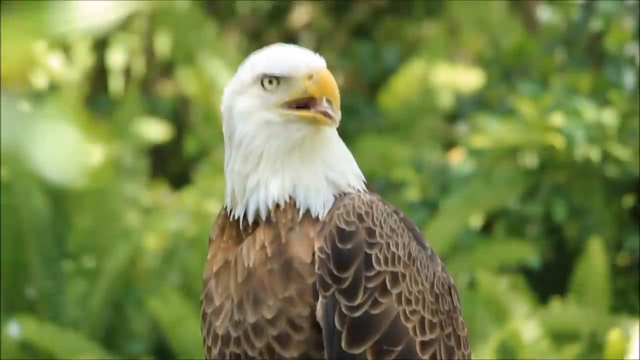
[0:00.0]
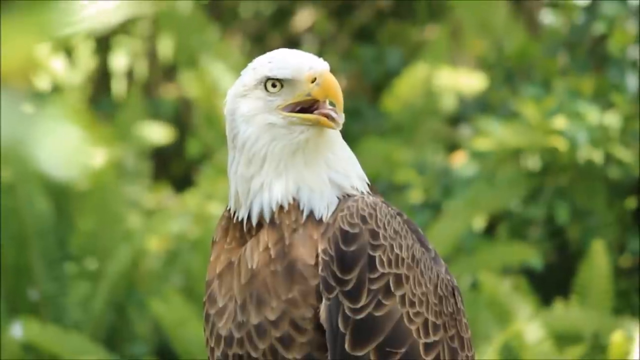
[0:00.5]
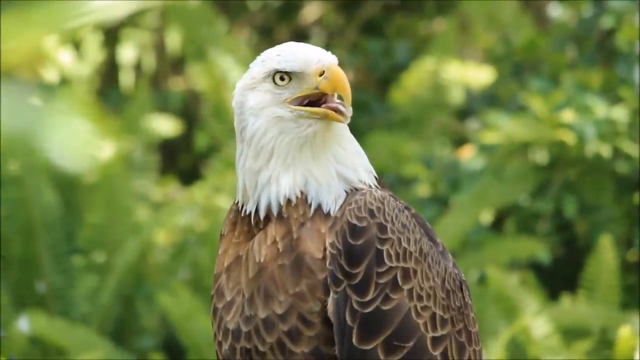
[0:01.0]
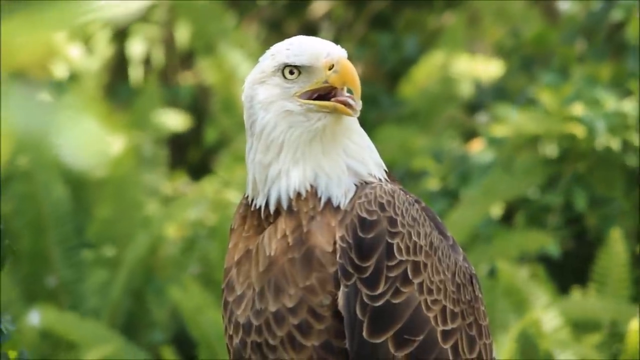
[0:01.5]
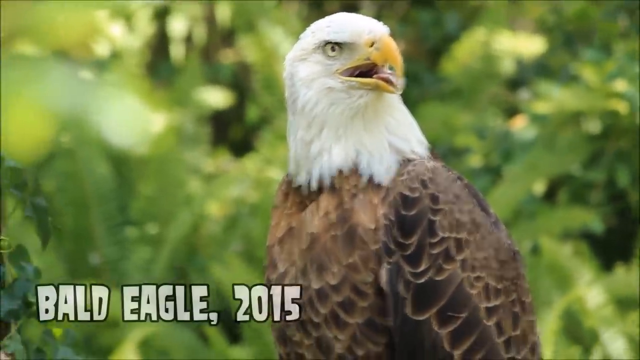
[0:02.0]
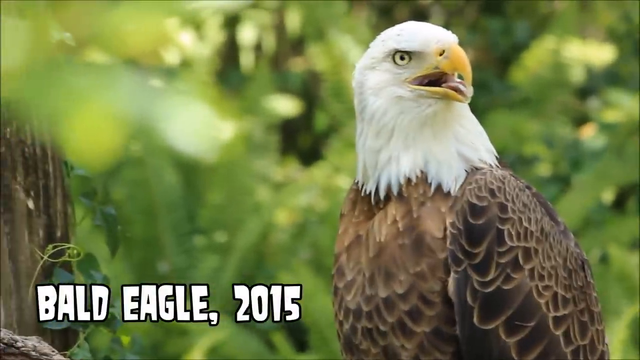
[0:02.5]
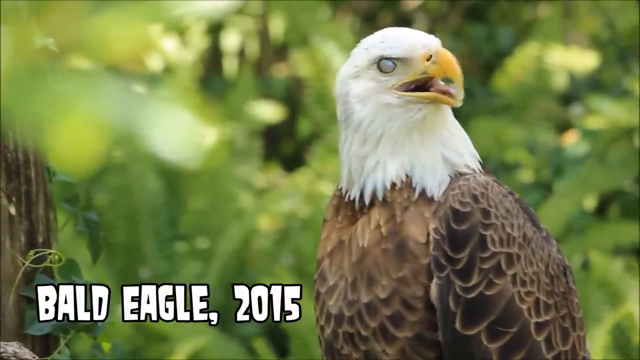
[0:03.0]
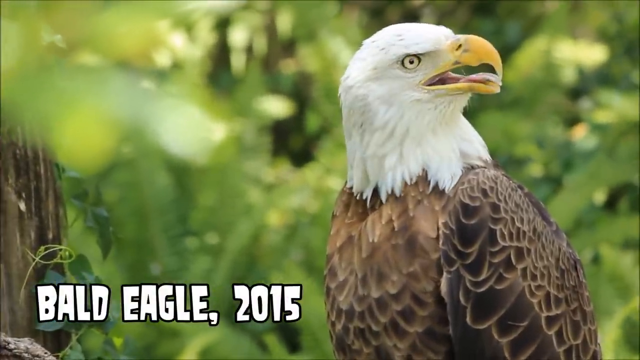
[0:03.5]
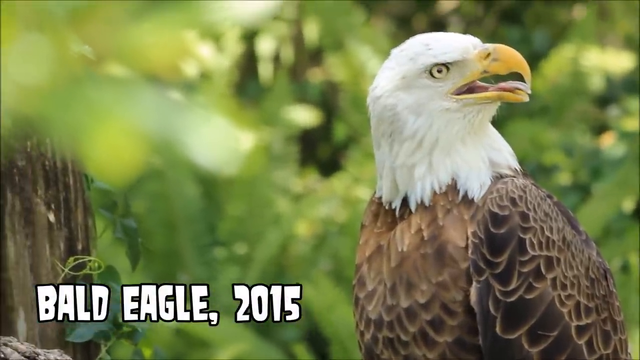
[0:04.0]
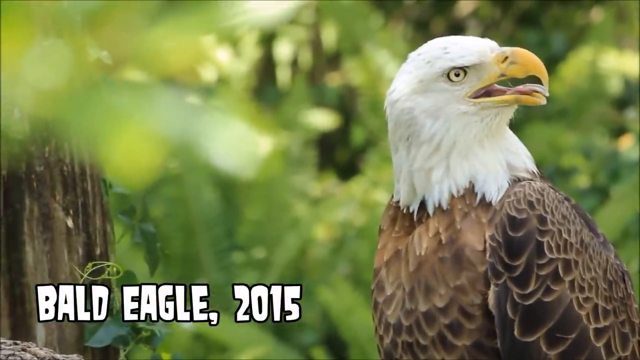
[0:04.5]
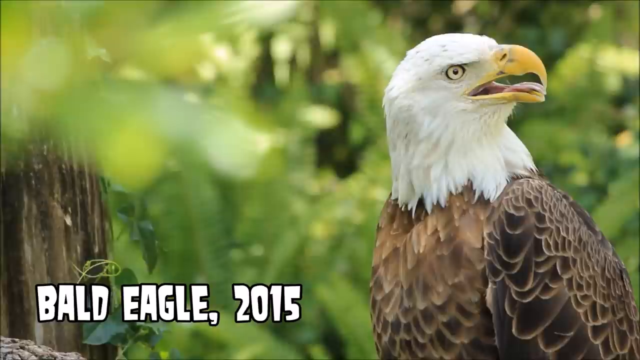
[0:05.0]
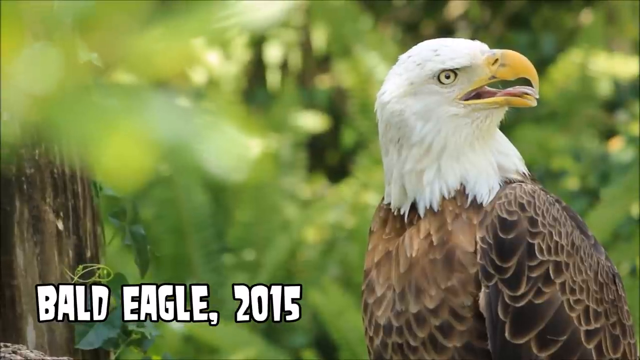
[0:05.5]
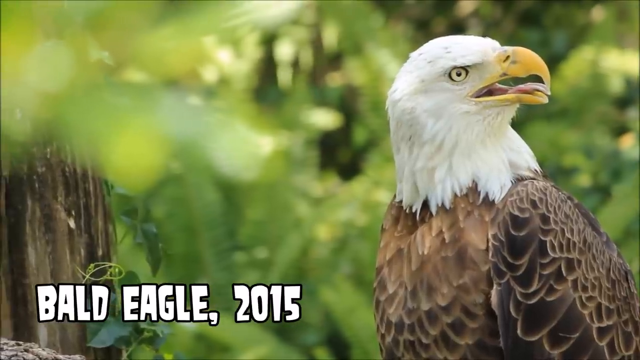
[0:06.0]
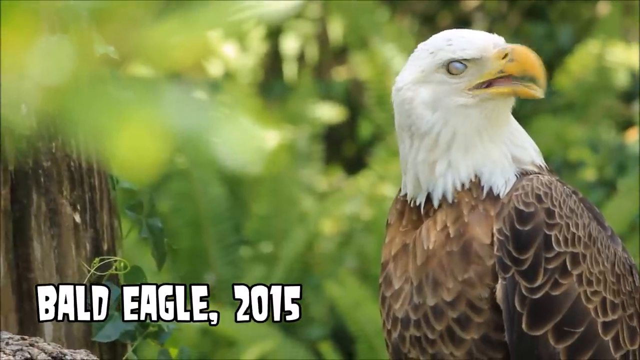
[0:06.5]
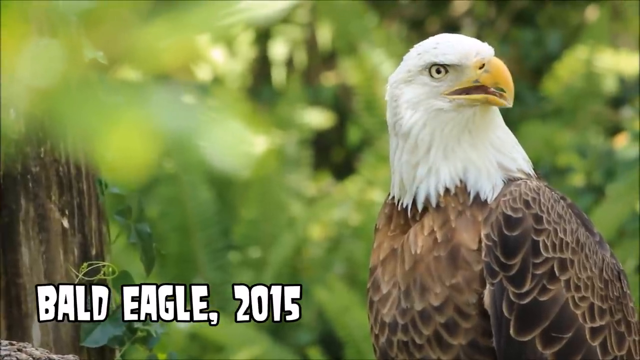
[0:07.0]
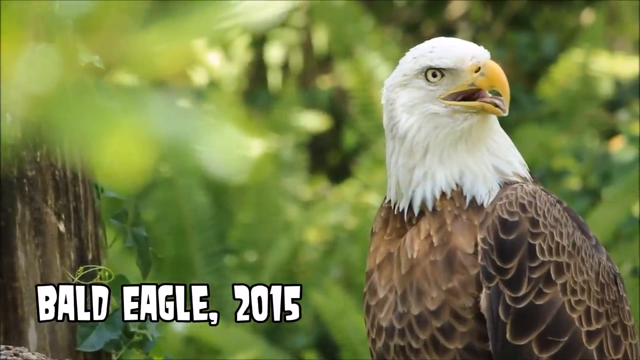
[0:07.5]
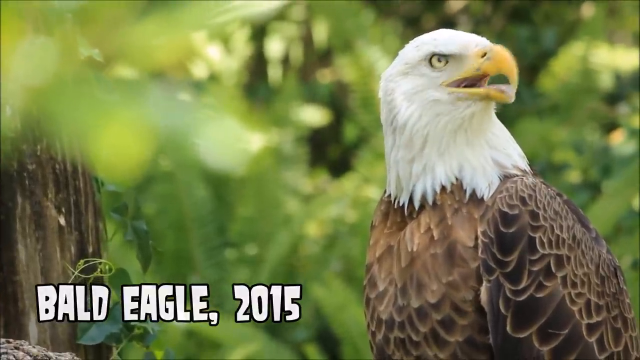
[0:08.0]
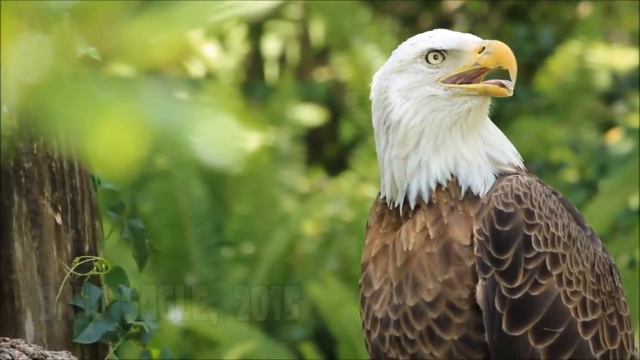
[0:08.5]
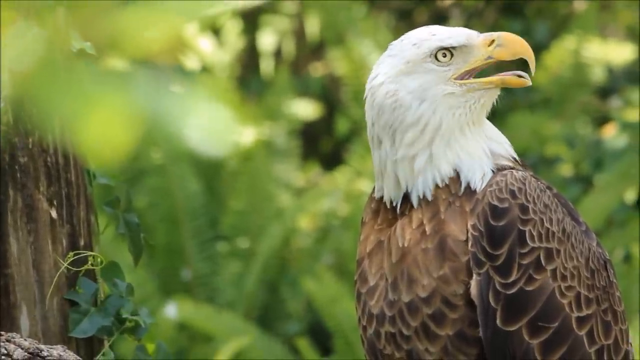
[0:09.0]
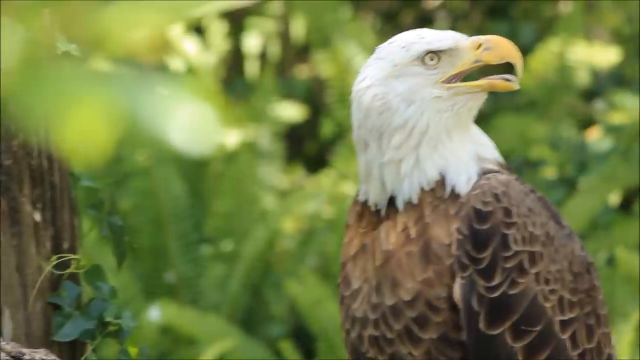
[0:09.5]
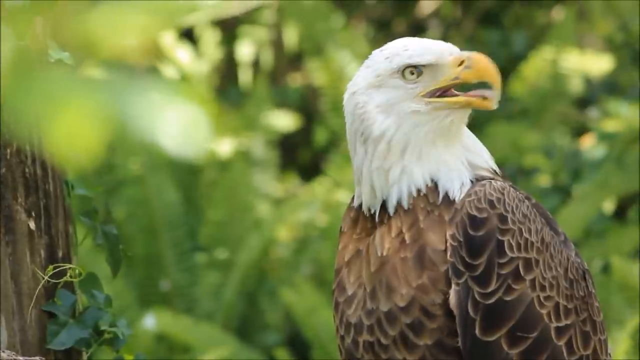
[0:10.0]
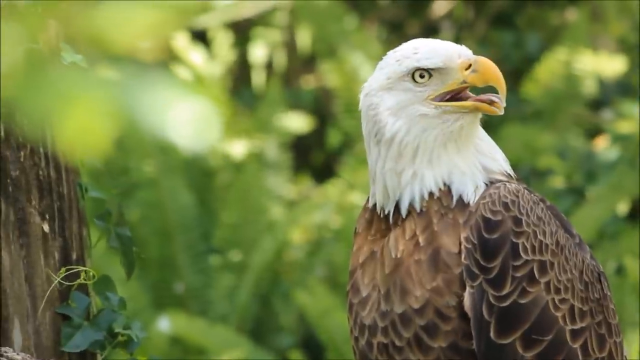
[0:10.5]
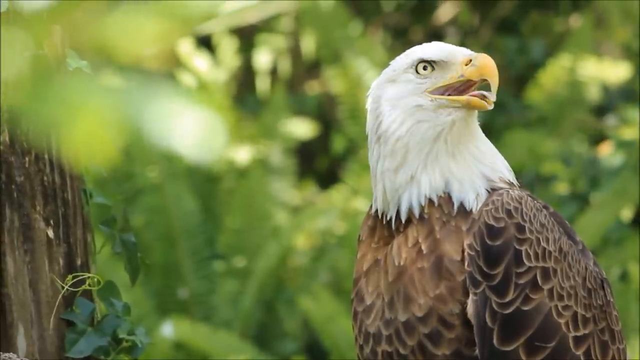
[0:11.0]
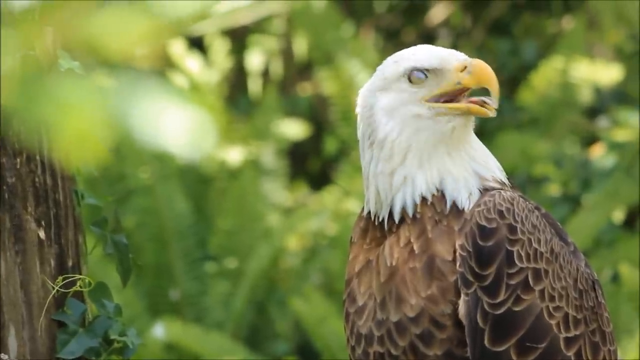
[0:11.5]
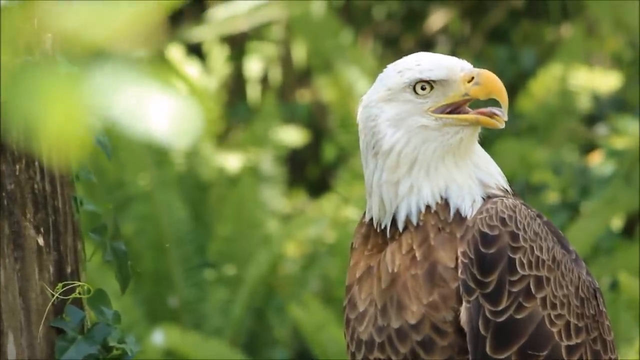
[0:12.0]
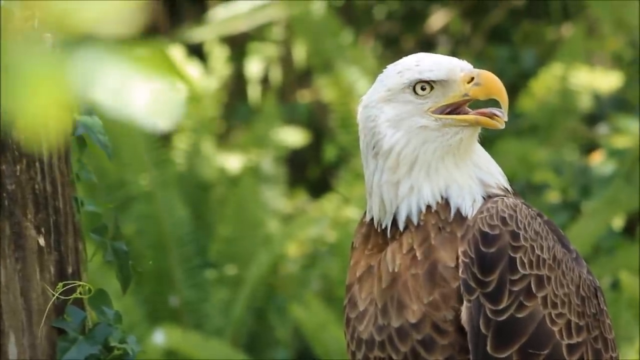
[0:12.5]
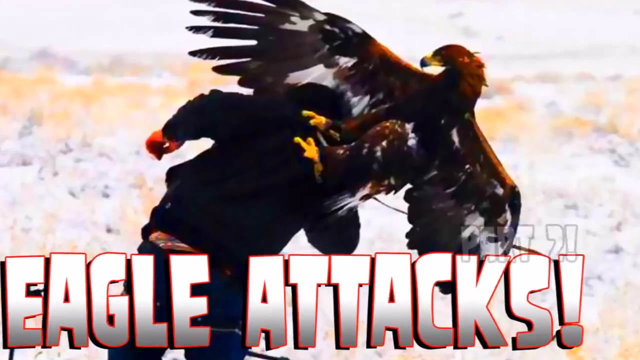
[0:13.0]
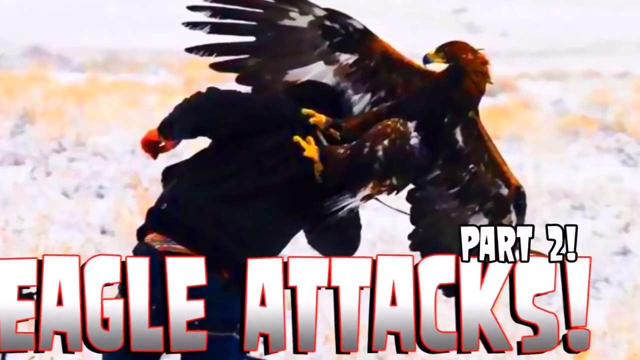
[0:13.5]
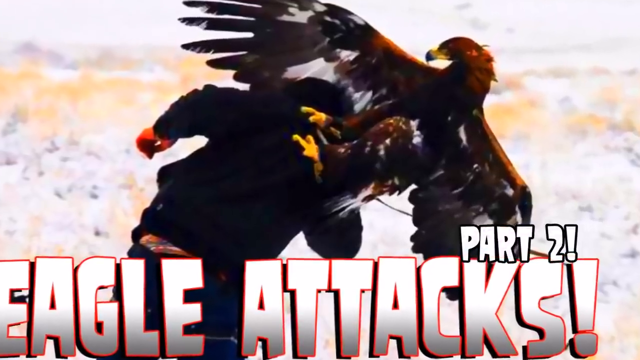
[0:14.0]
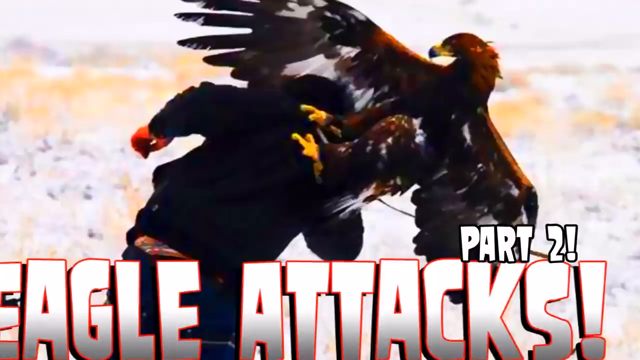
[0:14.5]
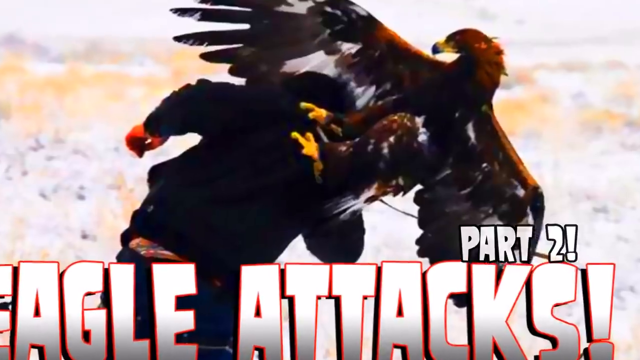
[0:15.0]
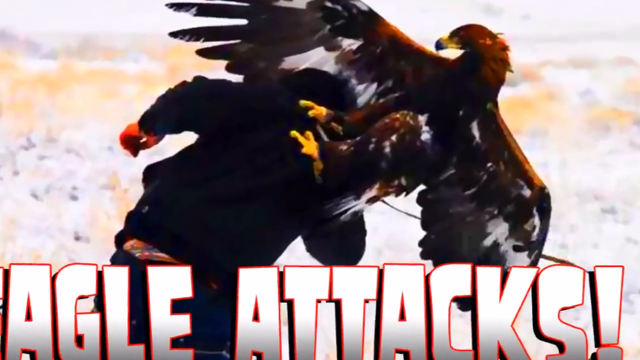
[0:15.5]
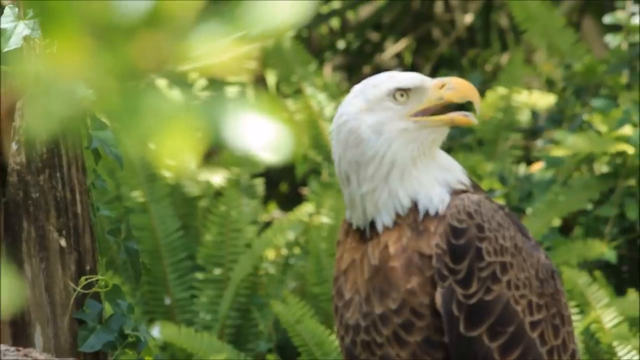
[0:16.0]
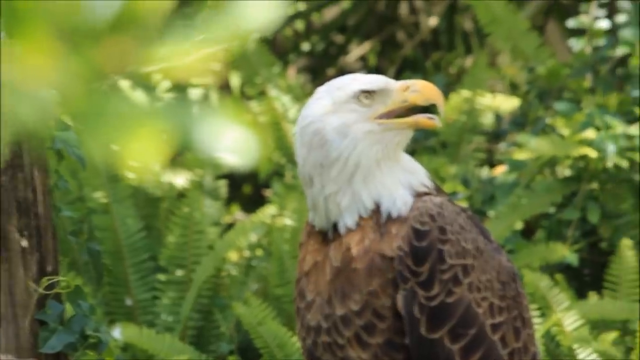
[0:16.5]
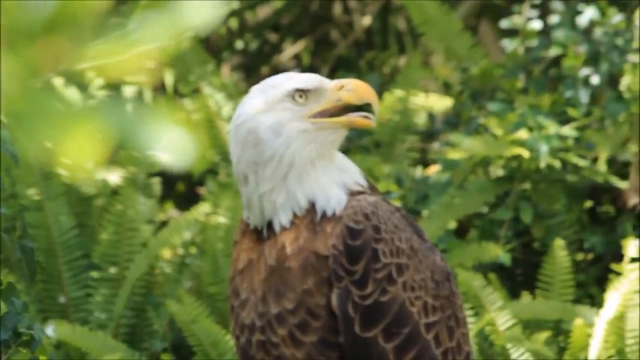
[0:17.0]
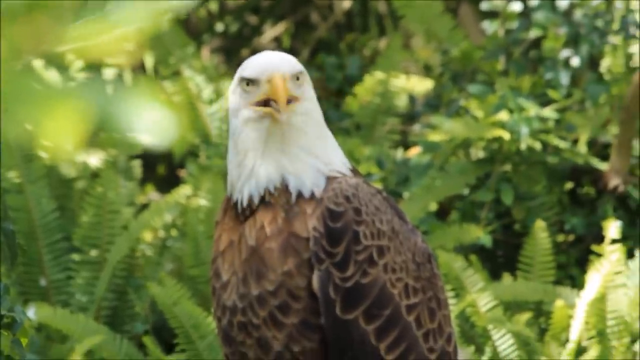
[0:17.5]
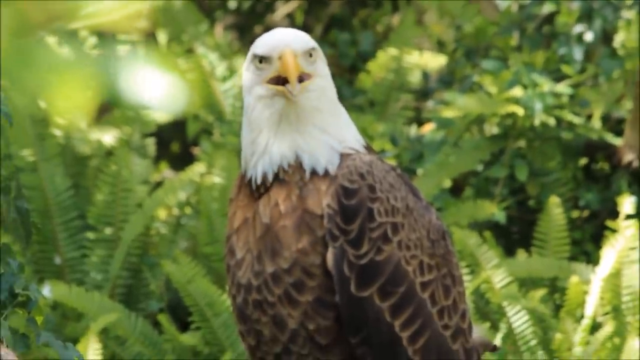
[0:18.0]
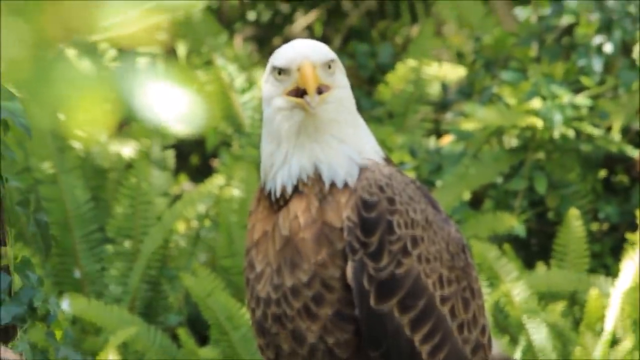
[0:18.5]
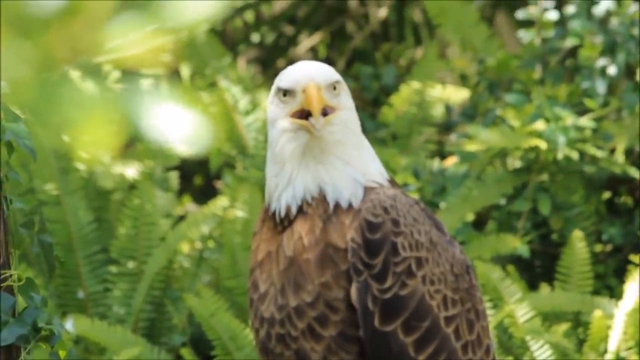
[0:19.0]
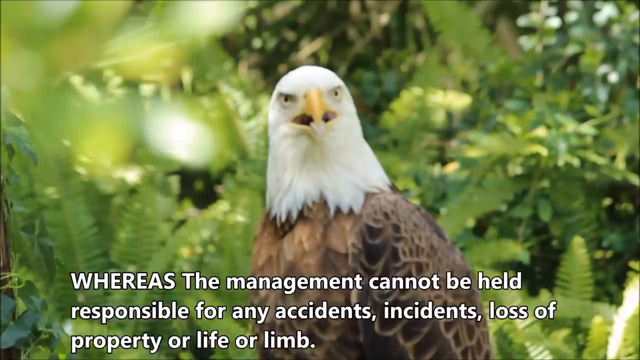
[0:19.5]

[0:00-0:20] An eagle with a white head, brown feathers and a yellow beak appears, with trees, leaves and vegetation behind it. It is then identified as a bald eagle, and "2015" is shown. The bald eagle turns its head and stares at something; its head can almost turn all the way around to look backwards. Next, an eagle attacks someone, with the text "eagle attacks, part two". The bald eagle footage returns and words pop up, beginning "whereas the management cannot be held".